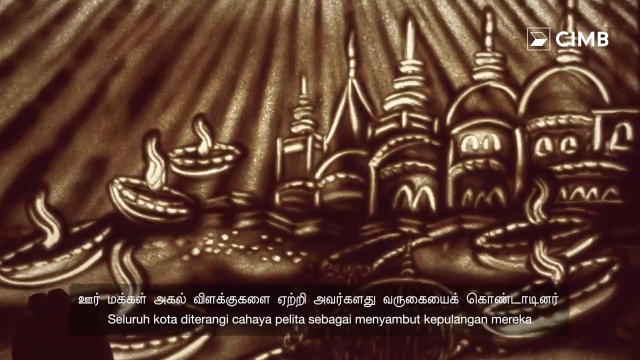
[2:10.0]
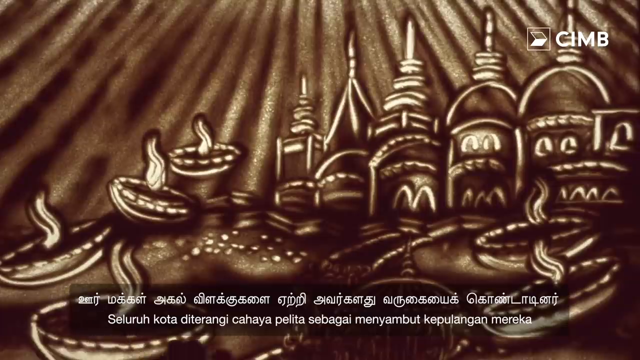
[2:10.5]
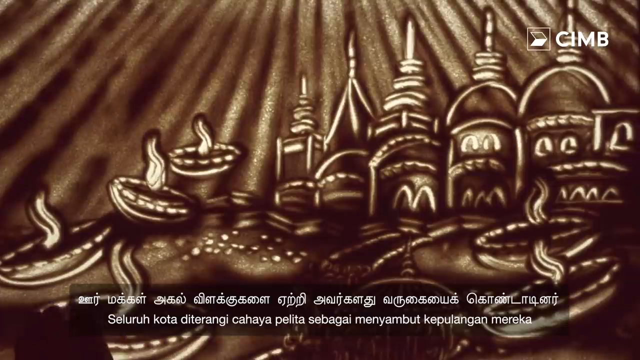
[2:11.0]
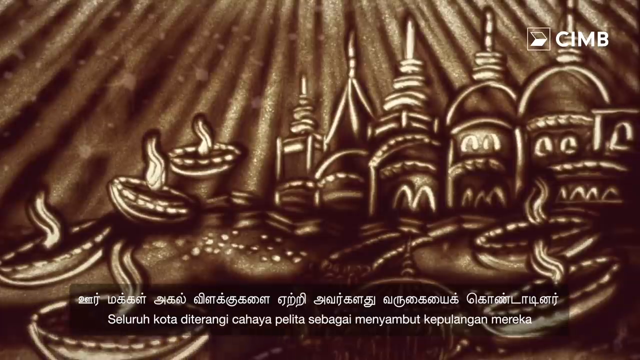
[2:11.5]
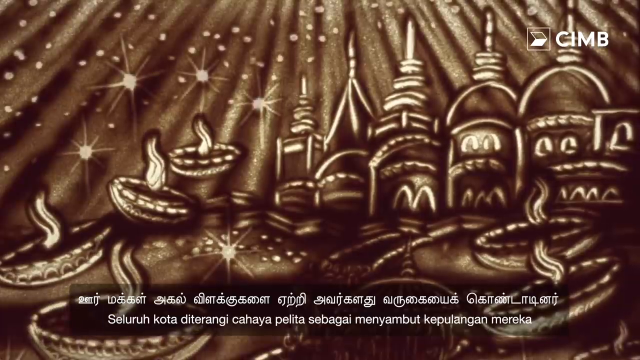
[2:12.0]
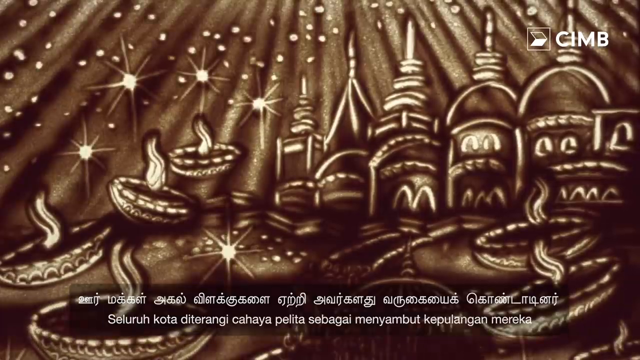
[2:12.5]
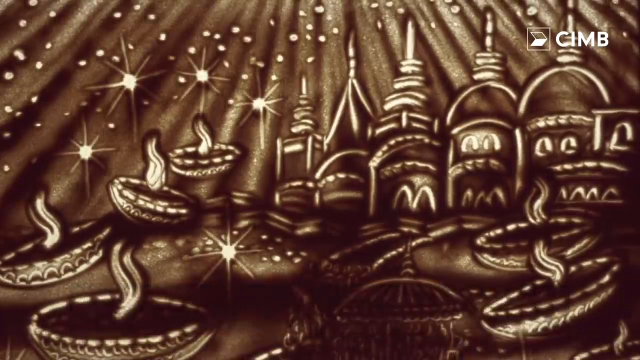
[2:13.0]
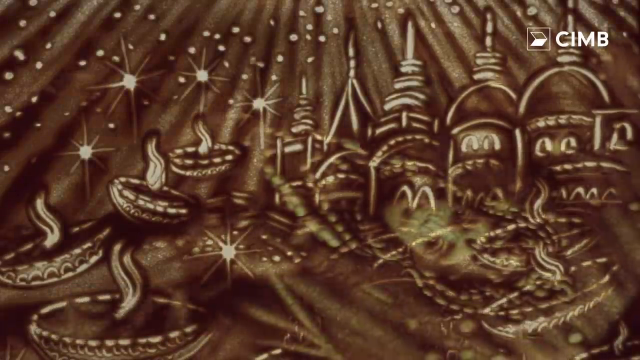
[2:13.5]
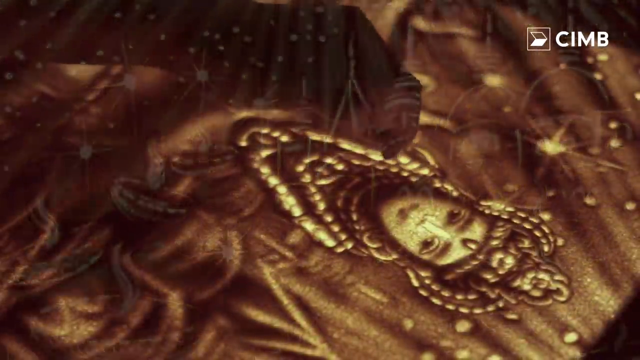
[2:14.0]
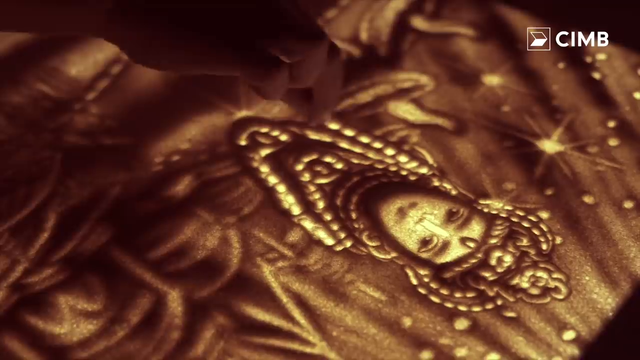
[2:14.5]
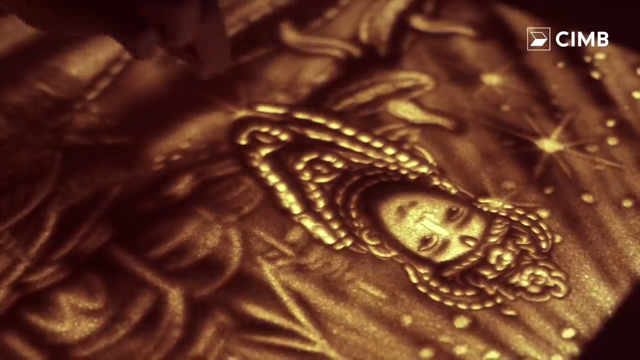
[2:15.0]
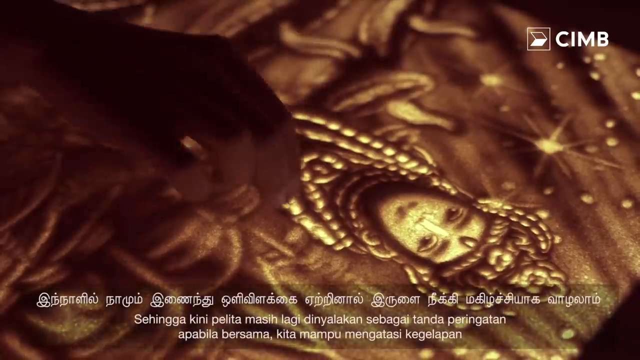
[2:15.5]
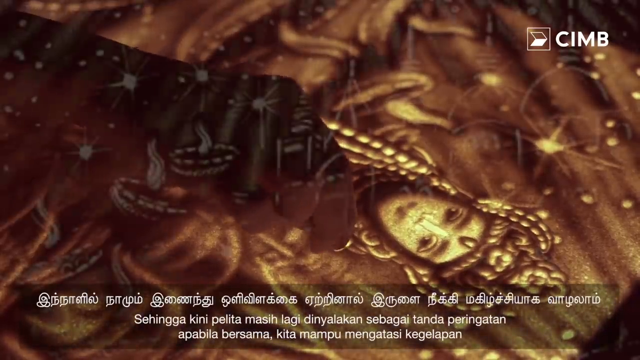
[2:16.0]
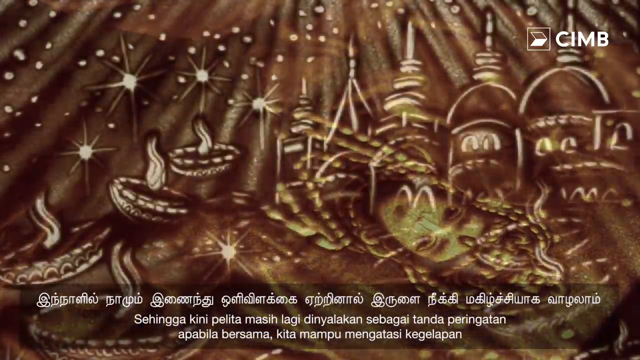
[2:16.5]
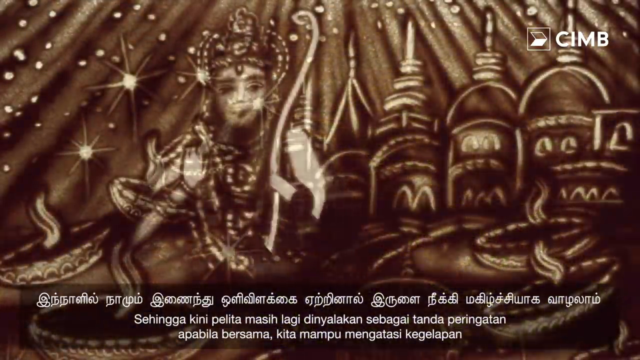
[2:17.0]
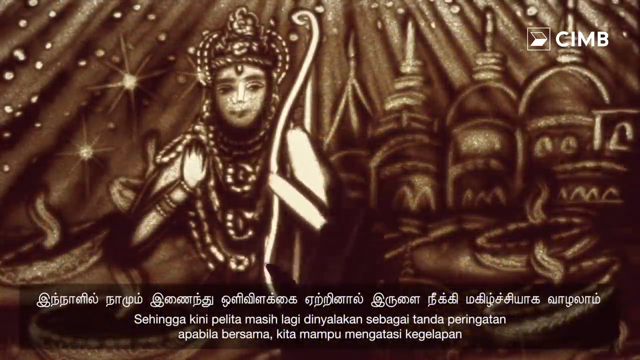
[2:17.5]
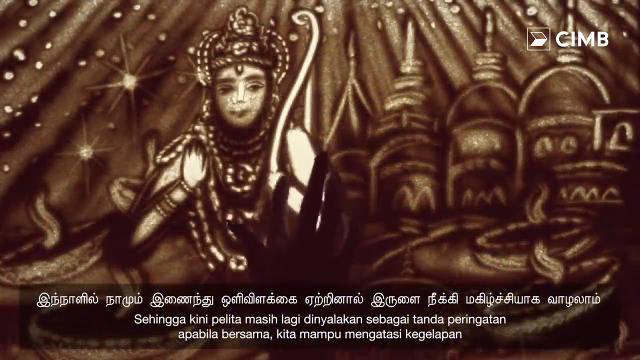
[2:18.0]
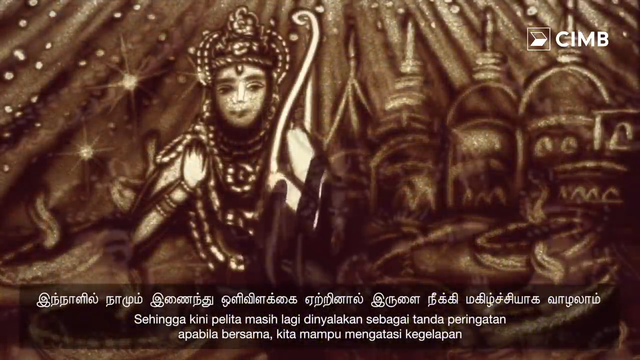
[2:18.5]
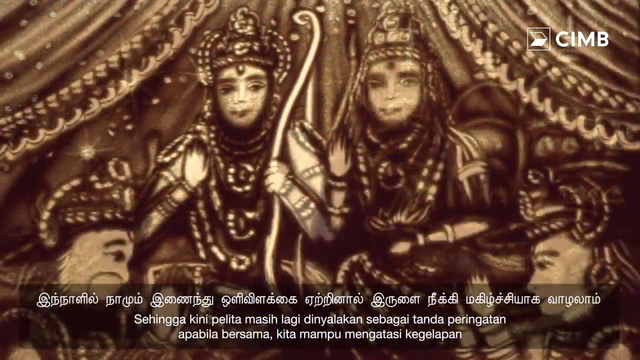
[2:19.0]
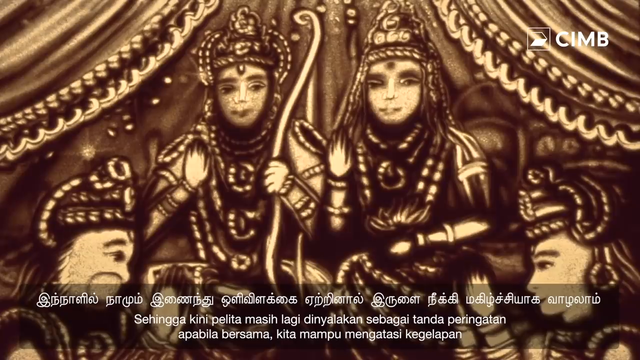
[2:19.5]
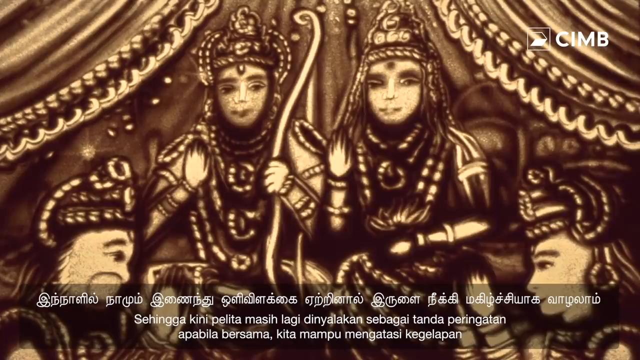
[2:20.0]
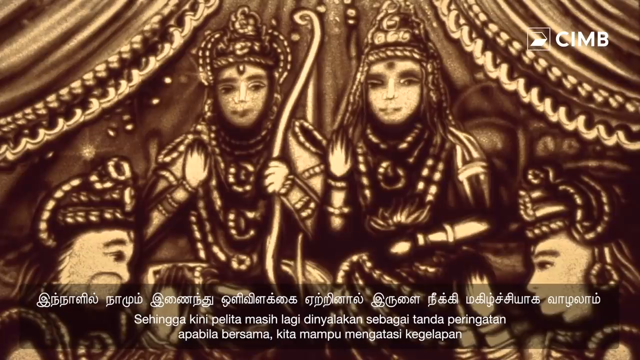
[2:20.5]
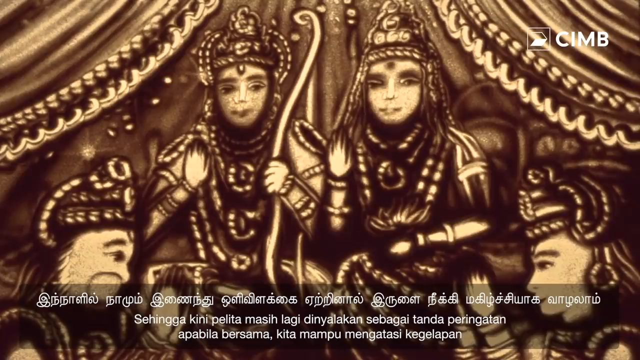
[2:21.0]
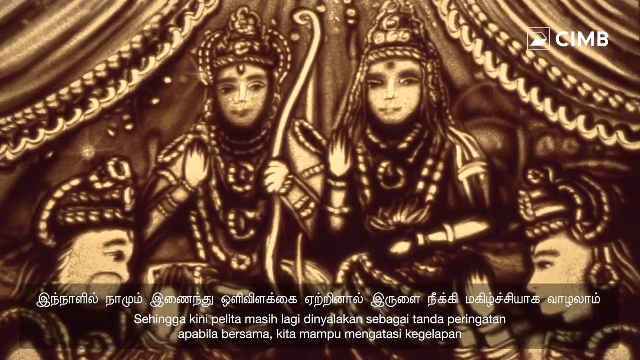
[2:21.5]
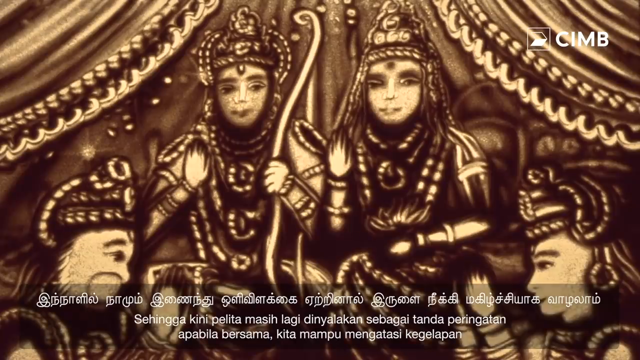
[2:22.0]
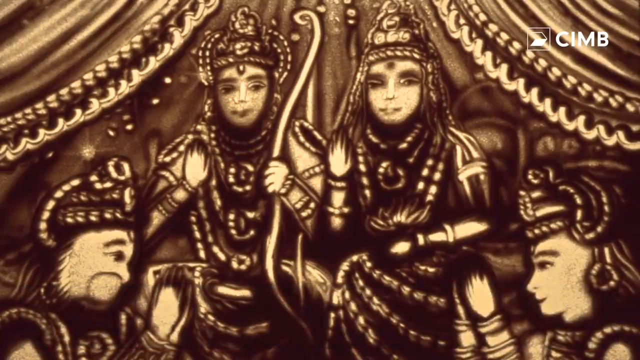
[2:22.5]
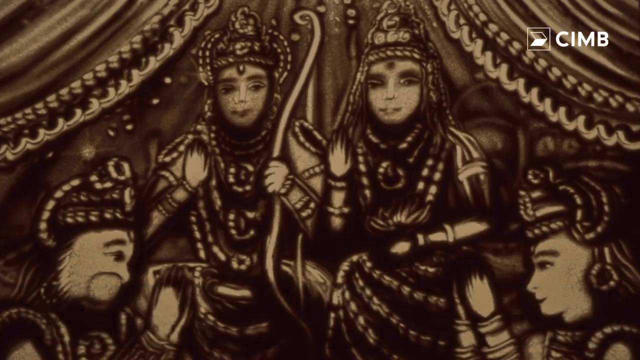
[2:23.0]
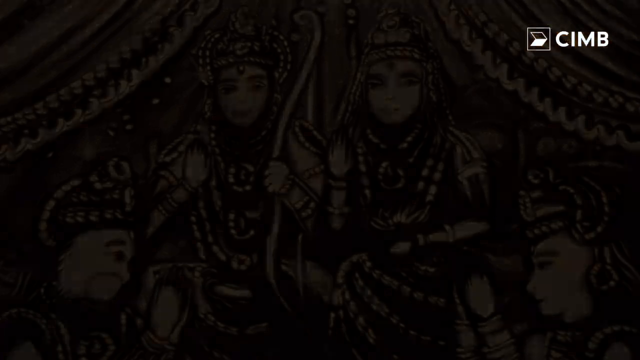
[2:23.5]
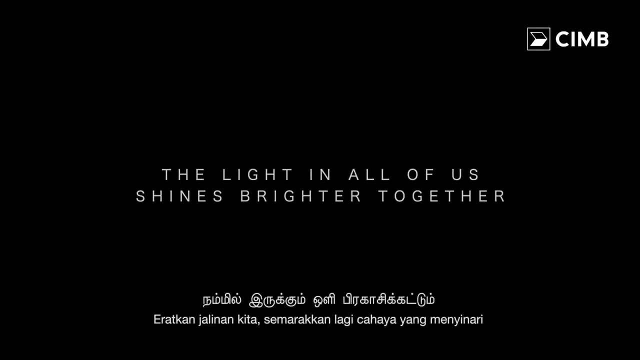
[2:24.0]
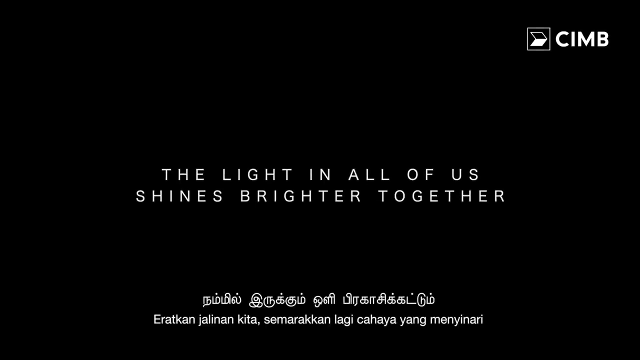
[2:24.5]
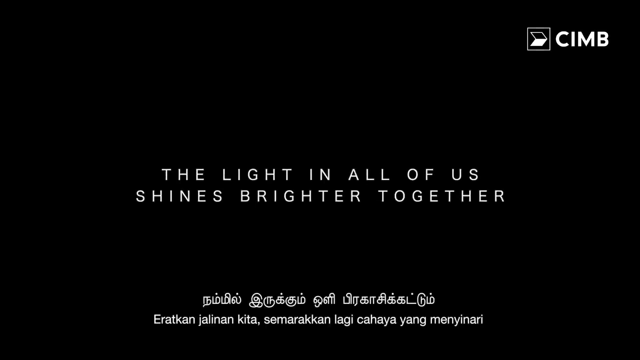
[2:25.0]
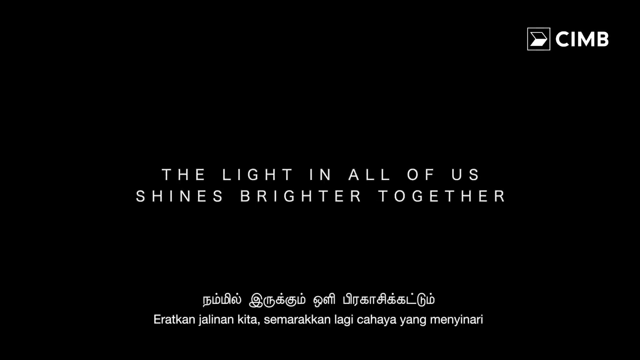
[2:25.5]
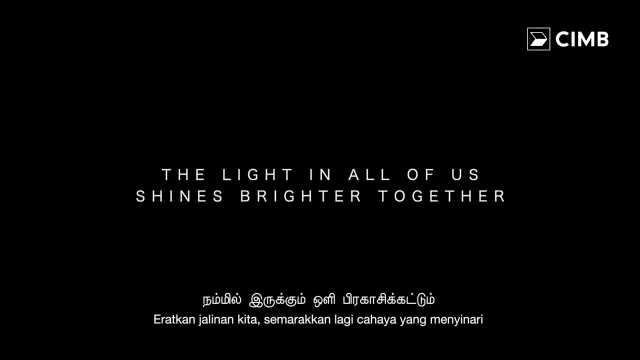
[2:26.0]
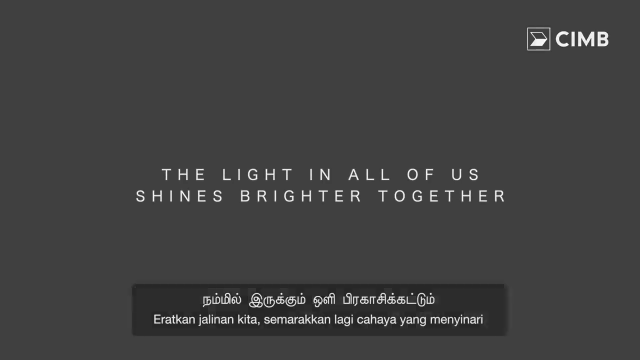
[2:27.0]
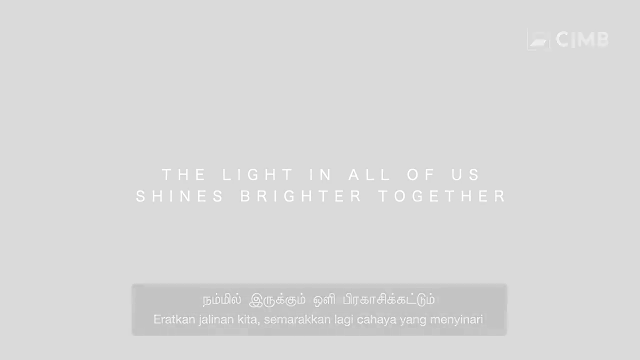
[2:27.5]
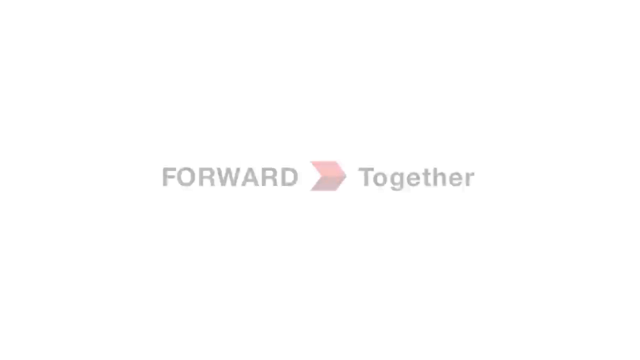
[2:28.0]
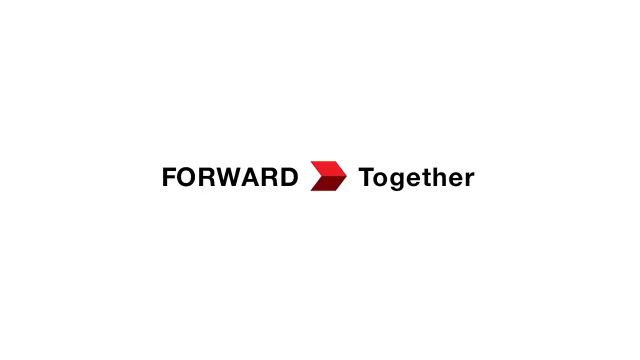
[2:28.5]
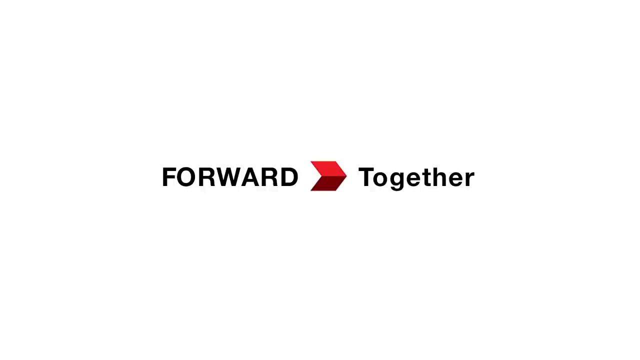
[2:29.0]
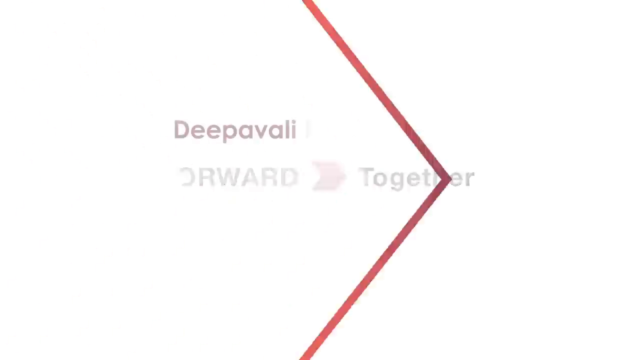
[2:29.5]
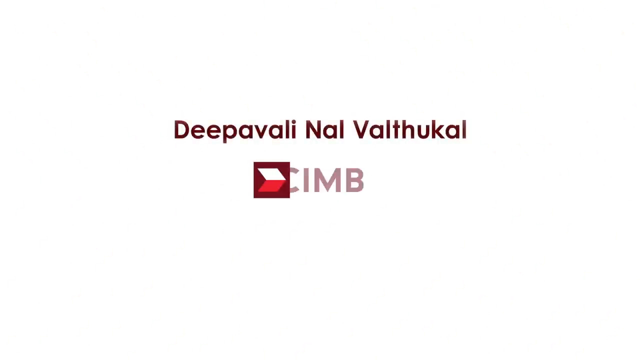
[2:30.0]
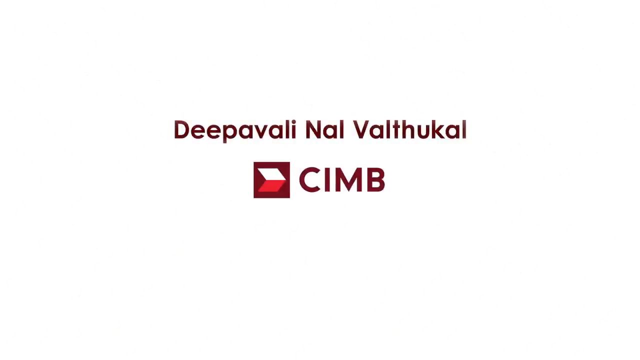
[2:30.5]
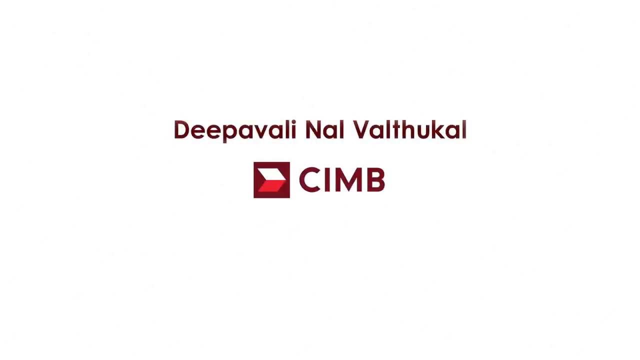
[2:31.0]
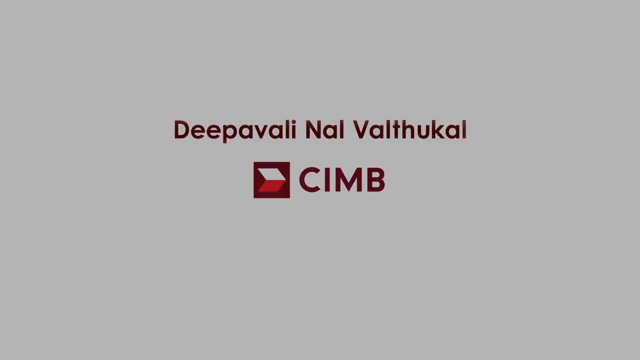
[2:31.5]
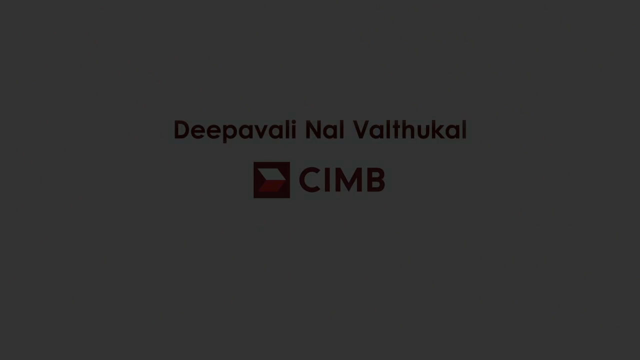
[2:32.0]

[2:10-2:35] The city-like scene shows five palace buildings on the right and, on the left, three candle-like structures with flames. There appears to be a sky with sparkling stars, the sparkling stars being on the left of the screen. A person again uses their fingers to draw a woman. The image fades away, and the same woman appears with the city-like background while a finger creates details of her arms. Next is an image of what looks like two royalty figures, one holding a long stick, with side profiles wearing headpieces below them, and apparently a curtain in the background. The scene fades away to a black background with white words in the middle that say "the light in all of us shines brighter together."